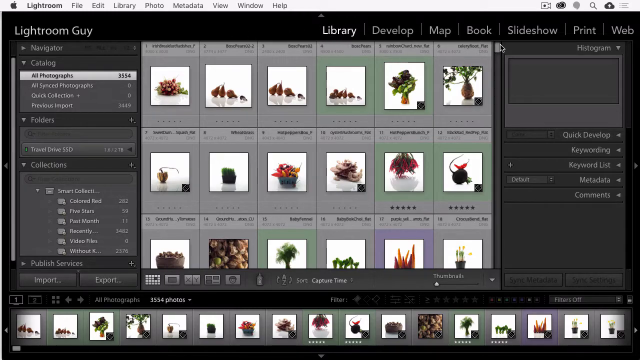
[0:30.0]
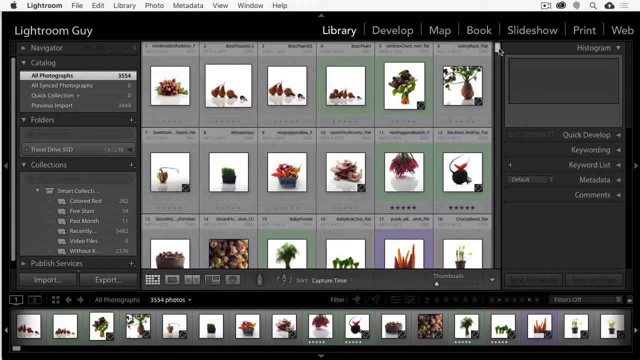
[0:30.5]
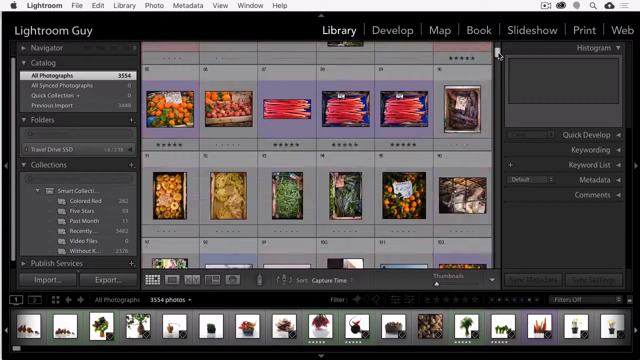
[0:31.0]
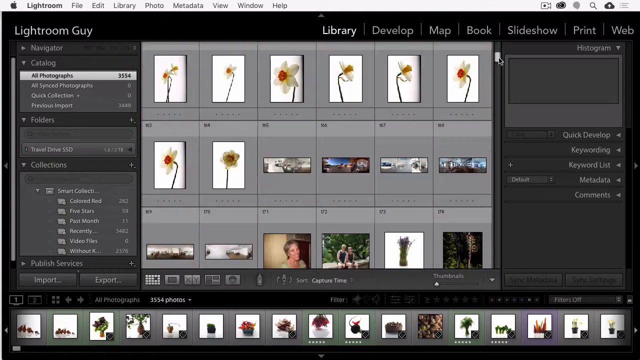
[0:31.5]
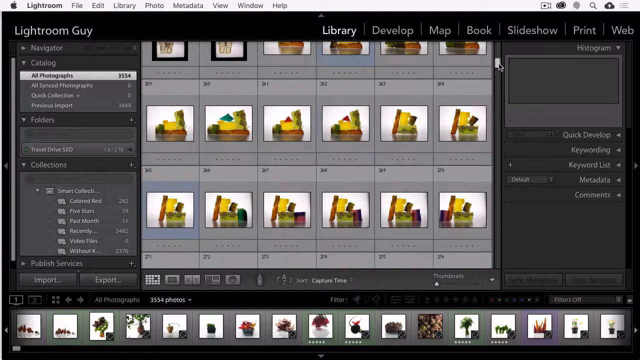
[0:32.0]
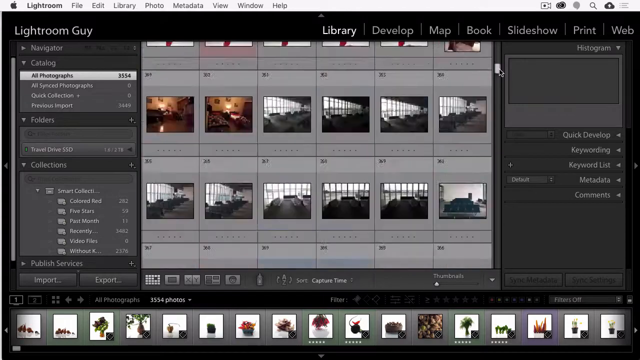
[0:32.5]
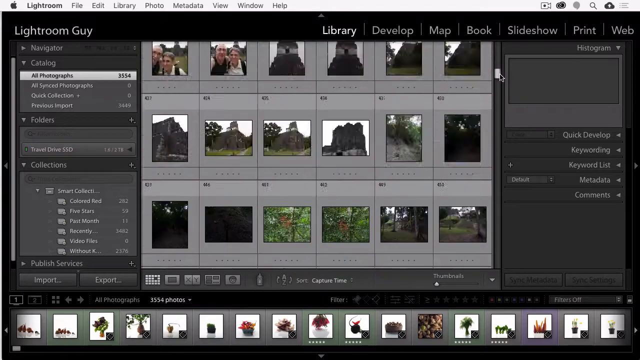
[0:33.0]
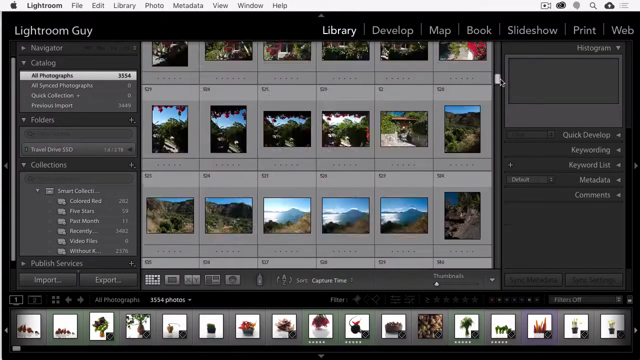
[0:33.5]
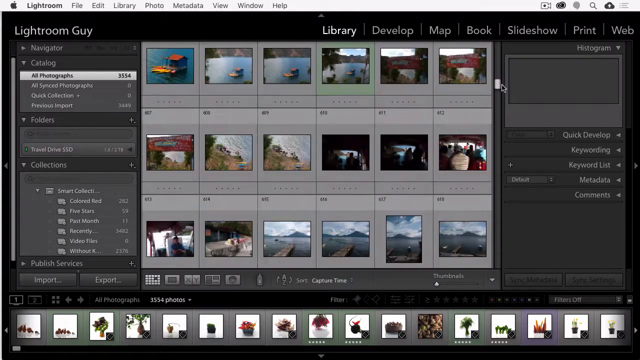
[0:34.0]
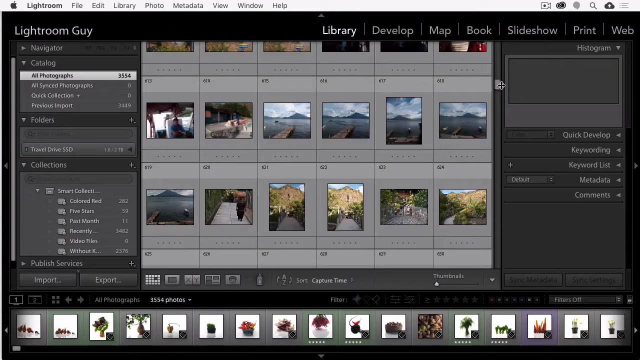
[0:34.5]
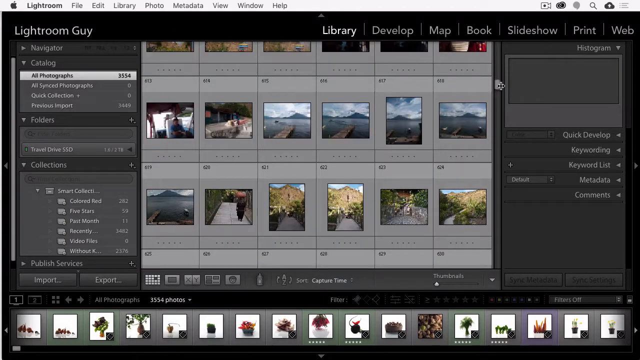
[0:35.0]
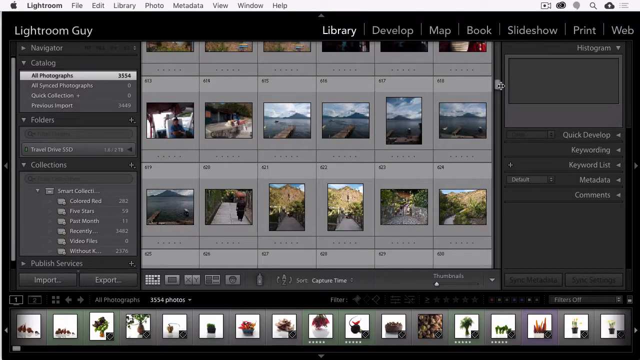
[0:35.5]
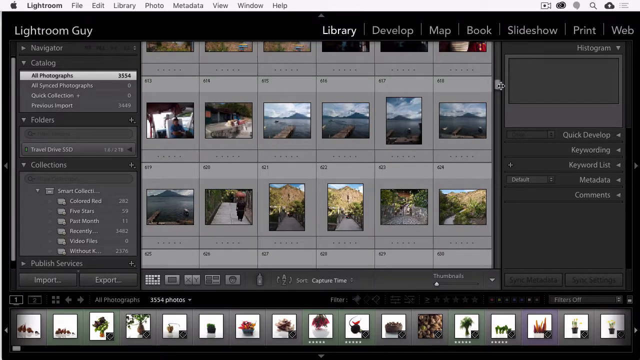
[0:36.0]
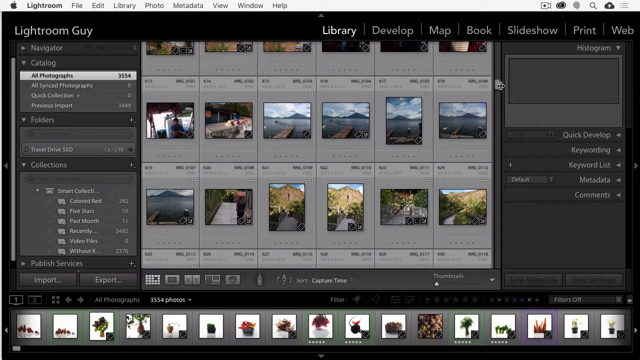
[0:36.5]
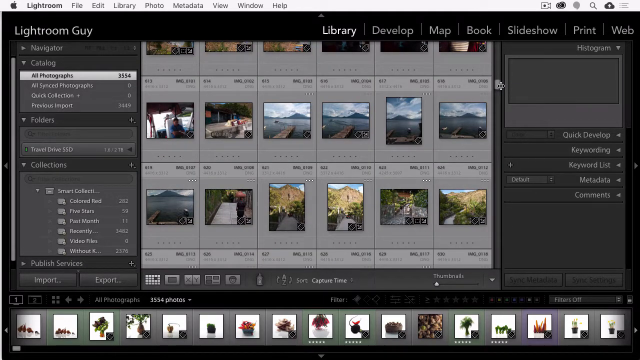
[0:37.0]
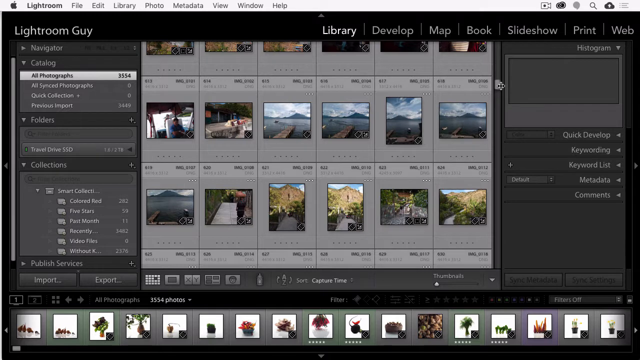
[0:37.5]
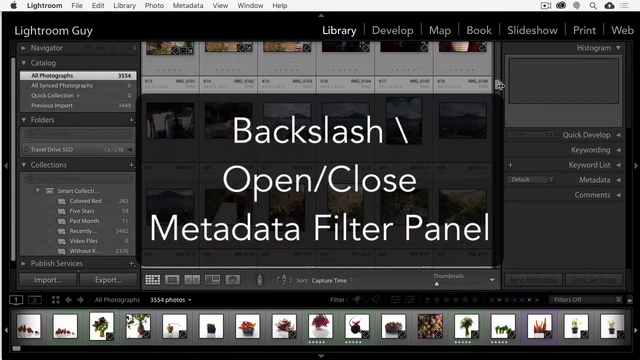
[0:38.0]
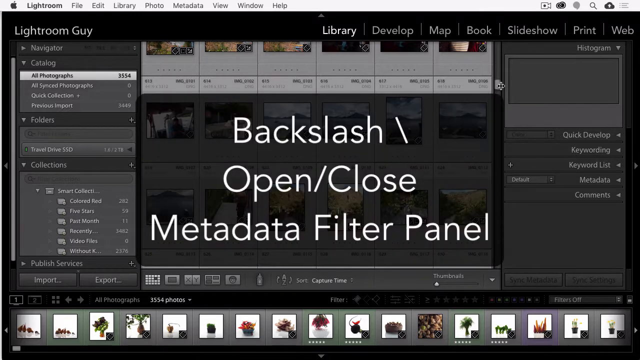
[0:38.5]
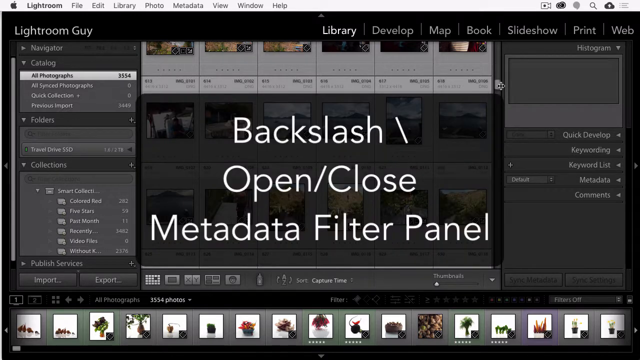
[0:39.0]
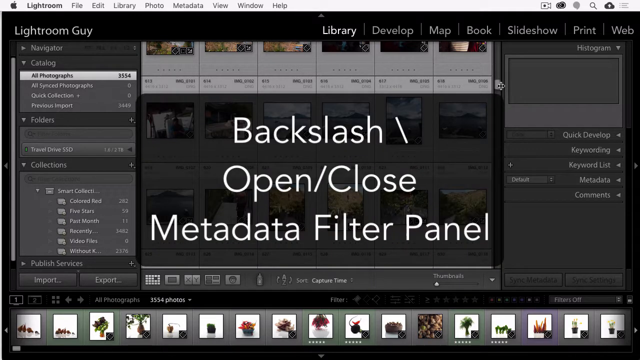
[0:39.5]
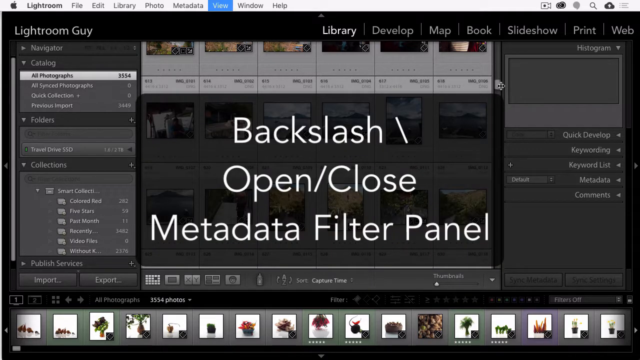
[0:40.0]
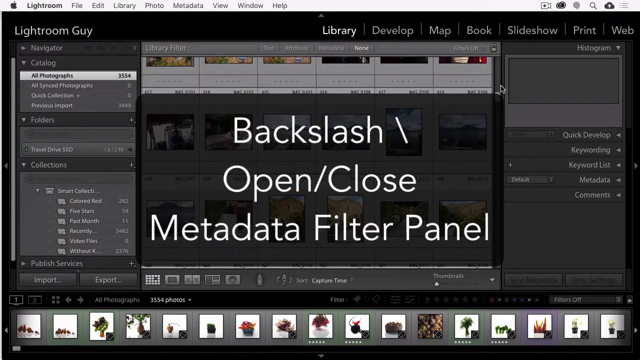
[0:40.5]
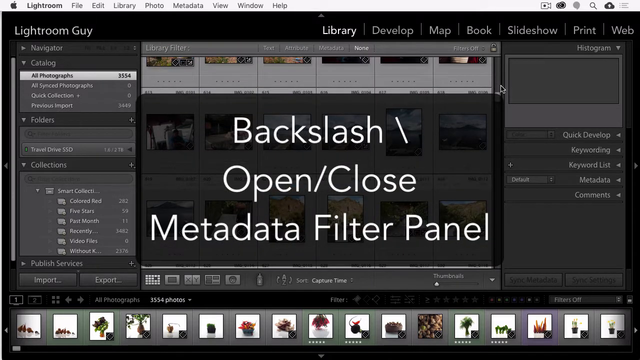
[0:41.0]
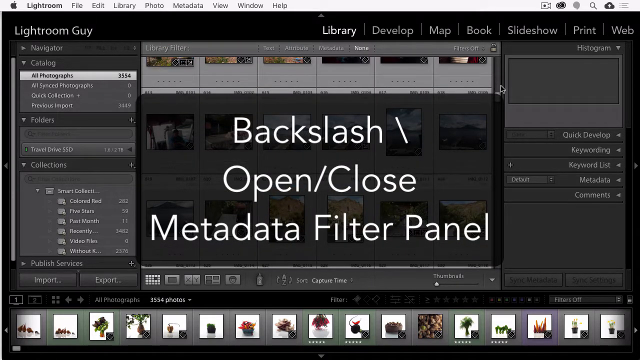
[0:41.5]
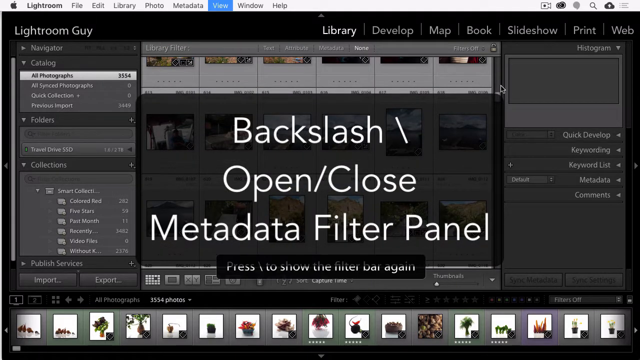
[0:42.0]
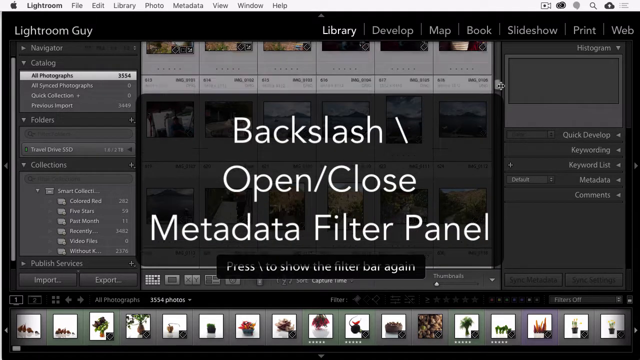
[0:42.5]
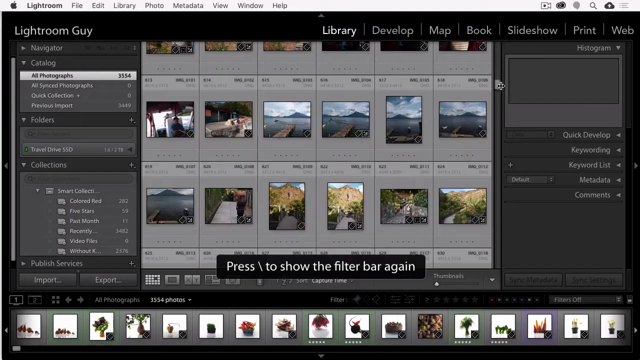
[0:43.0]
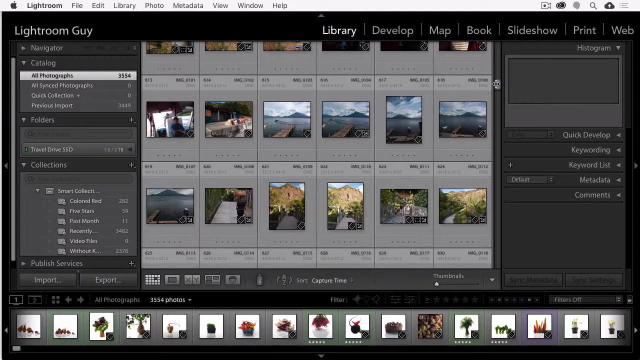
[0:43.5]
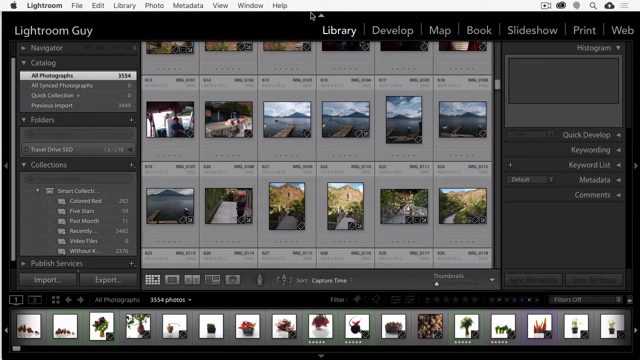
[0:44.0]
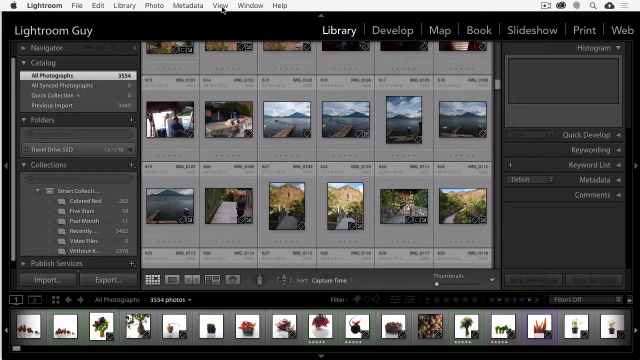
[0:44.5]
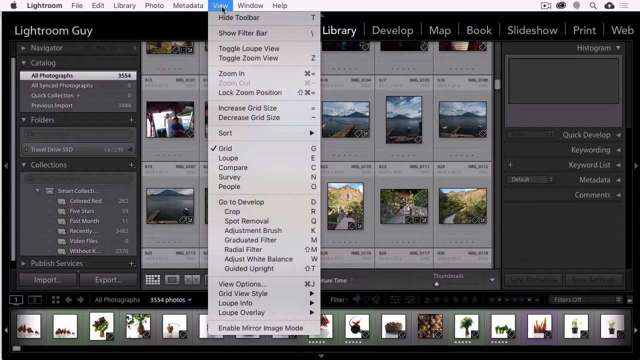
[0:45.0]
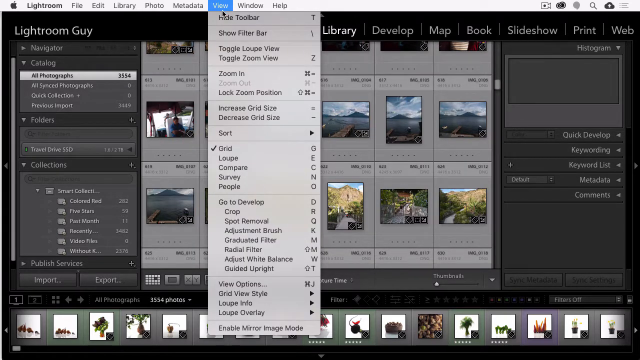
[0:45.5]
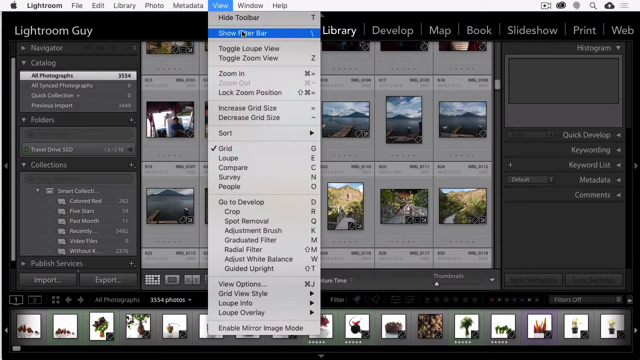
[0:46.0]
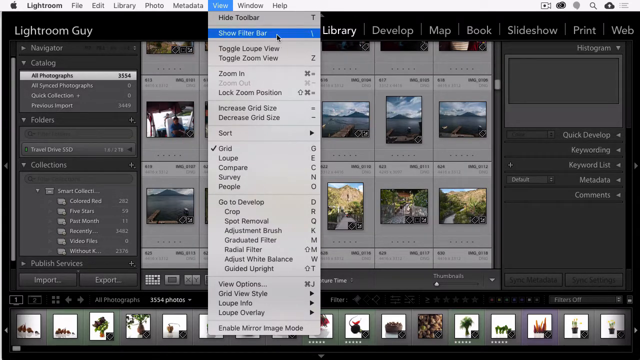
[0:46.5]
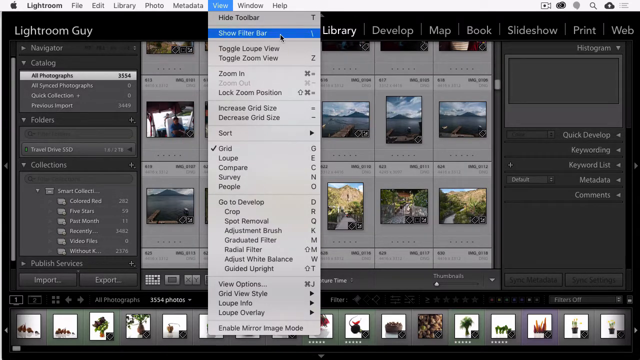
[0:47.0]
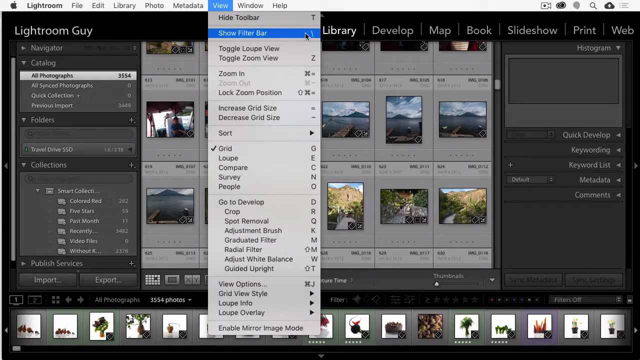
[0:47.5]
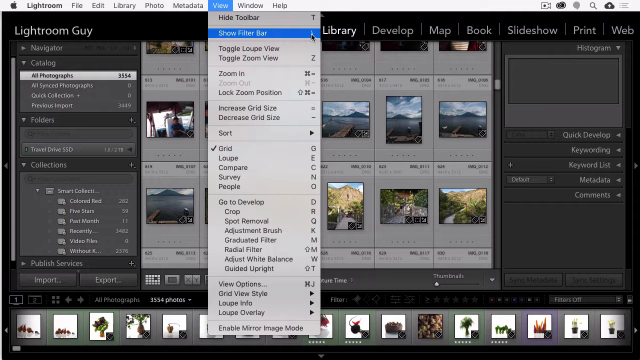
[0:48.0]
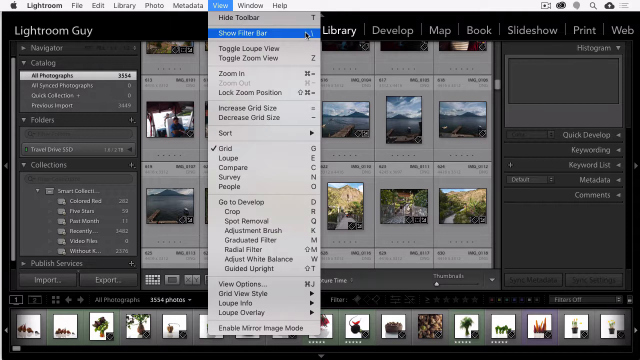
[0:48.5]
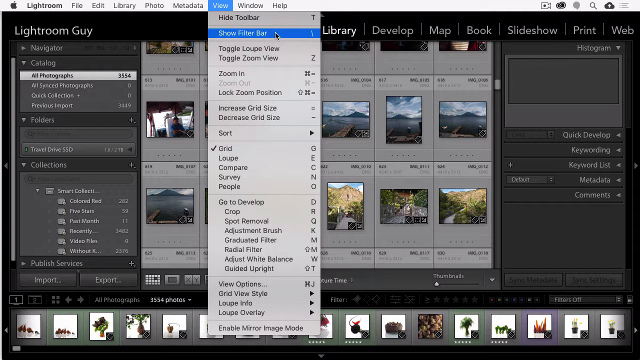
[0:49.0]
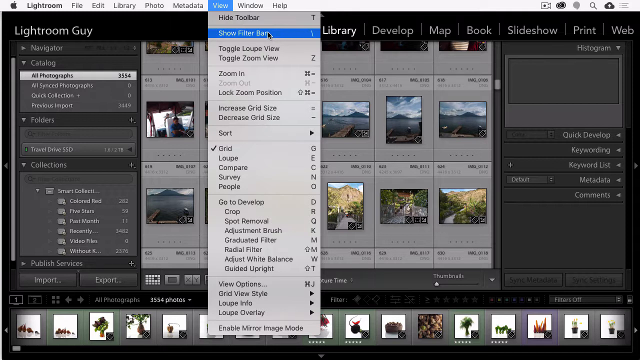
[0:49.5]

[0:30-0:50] The user scrolls down through many different pictures. Suddenly the text "open or close metadata filter panel" appears on the screen. The arrow then moves to the View button at the top, and when it is clicked, various options appear for how to view photos in the Library module, along with options for developing and editing pictures, such as spot removal, crop, adjustment brush and graduate filter. An Apple logo in the top left corner of the screen suggests the app is open on an Apple device. The option "show filter bar" is blue, meaning it has been clicked.